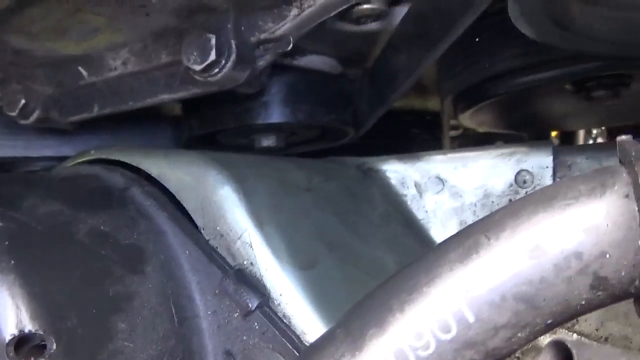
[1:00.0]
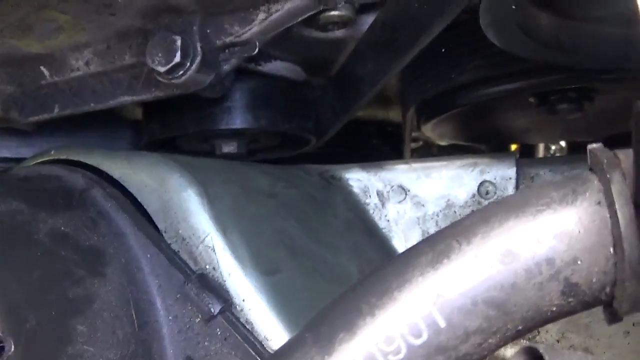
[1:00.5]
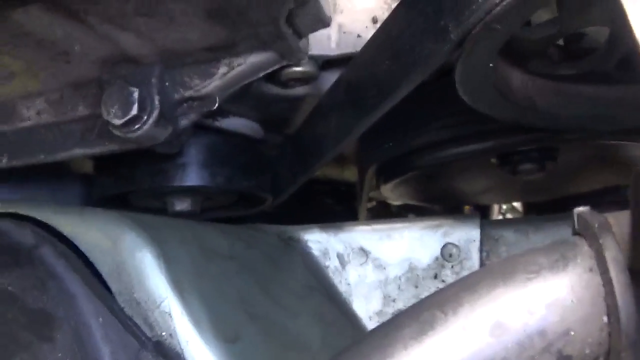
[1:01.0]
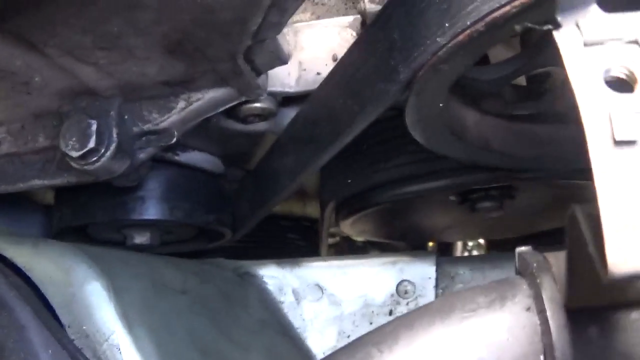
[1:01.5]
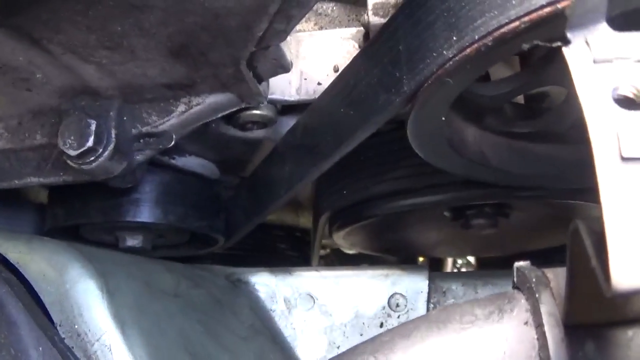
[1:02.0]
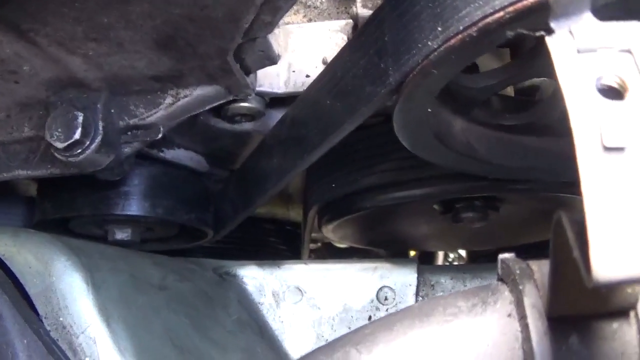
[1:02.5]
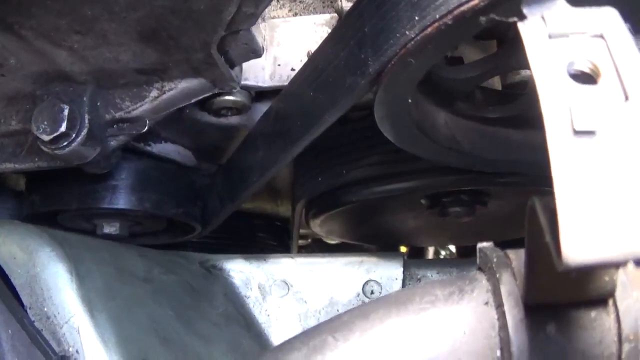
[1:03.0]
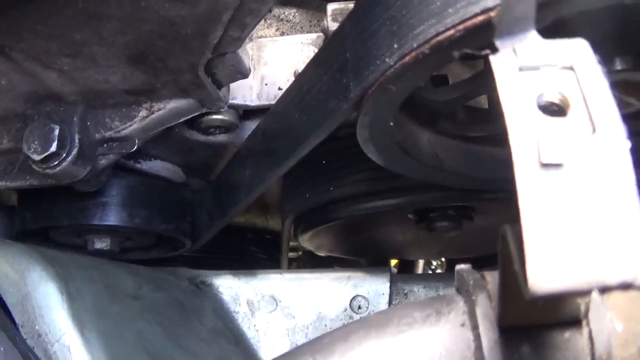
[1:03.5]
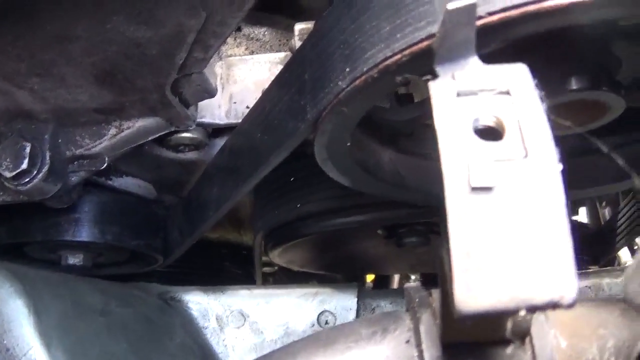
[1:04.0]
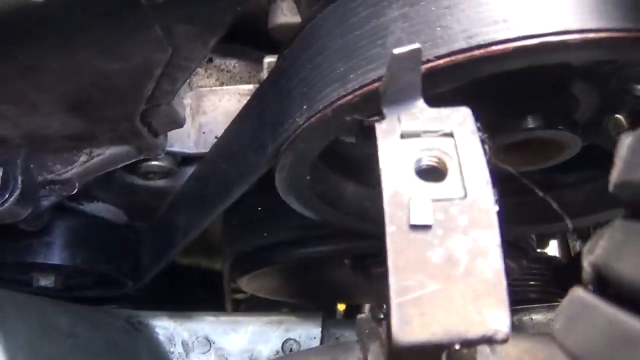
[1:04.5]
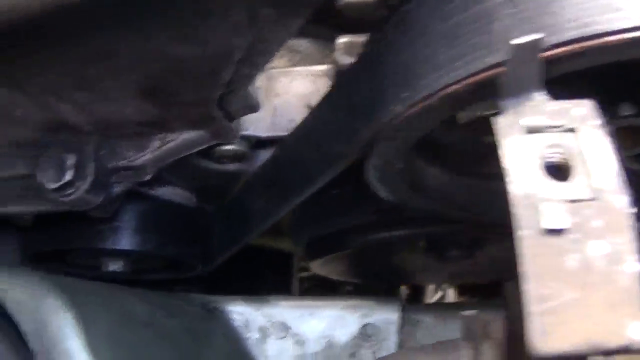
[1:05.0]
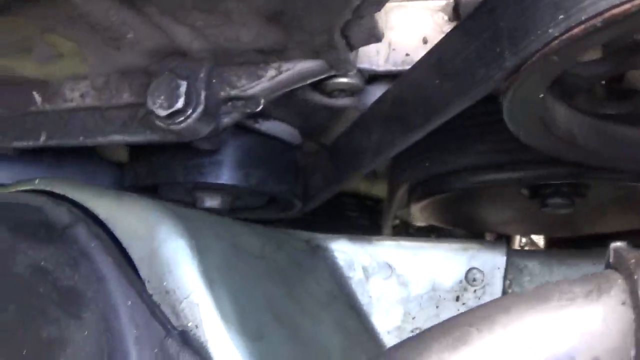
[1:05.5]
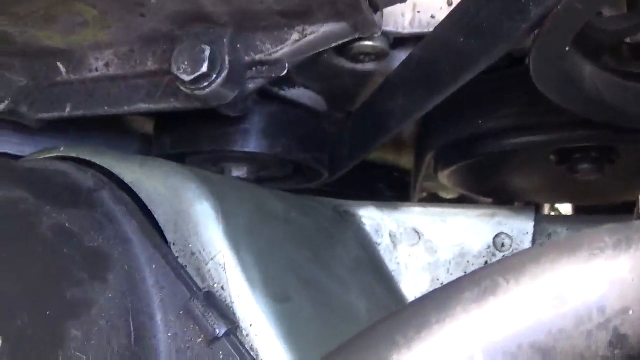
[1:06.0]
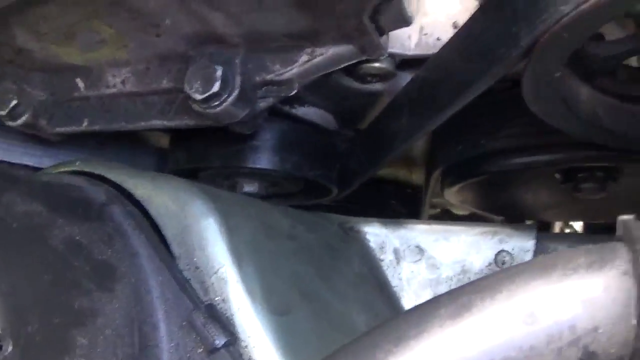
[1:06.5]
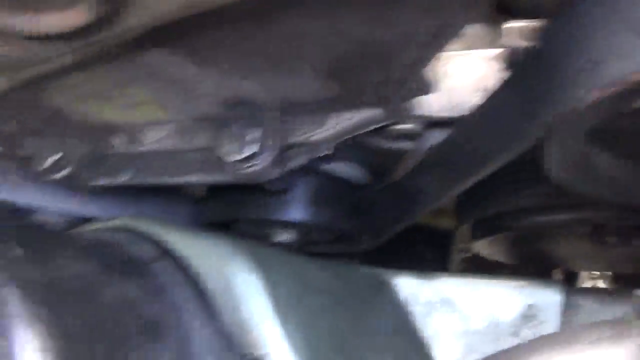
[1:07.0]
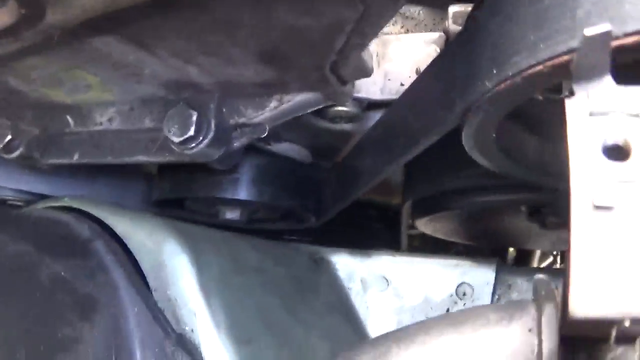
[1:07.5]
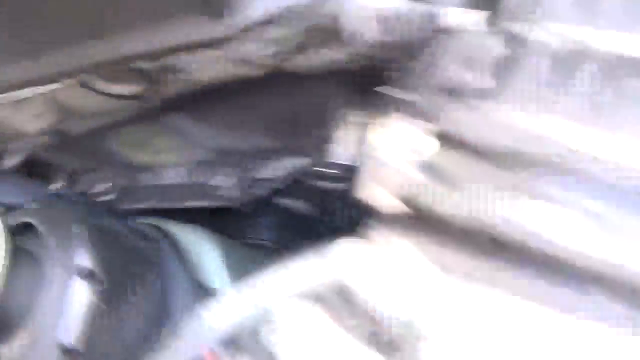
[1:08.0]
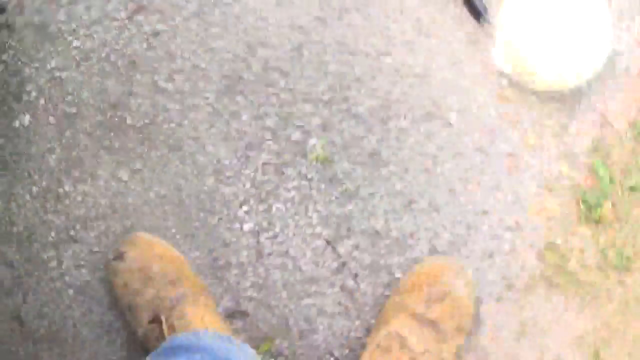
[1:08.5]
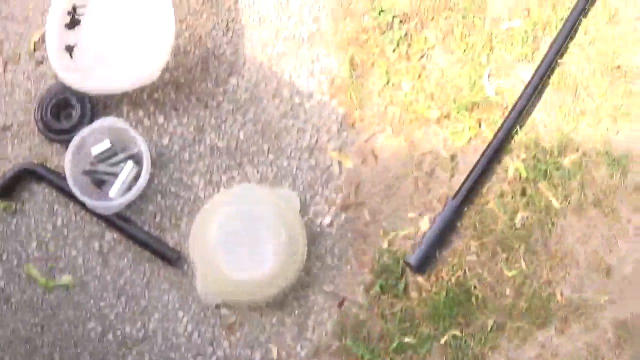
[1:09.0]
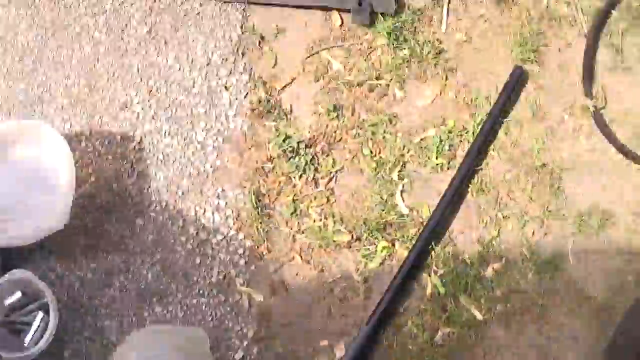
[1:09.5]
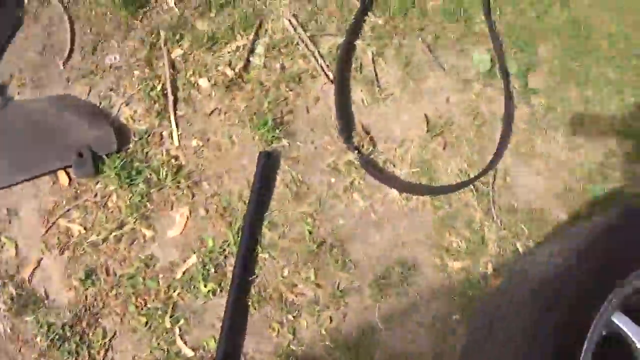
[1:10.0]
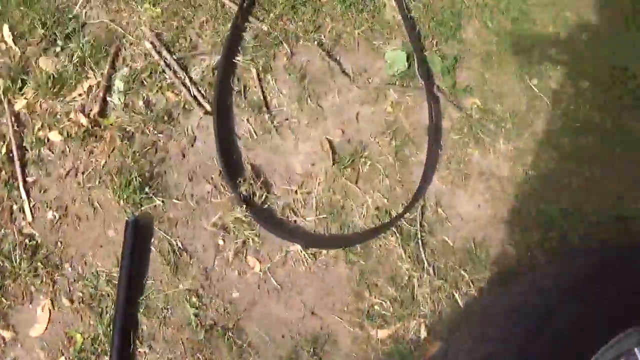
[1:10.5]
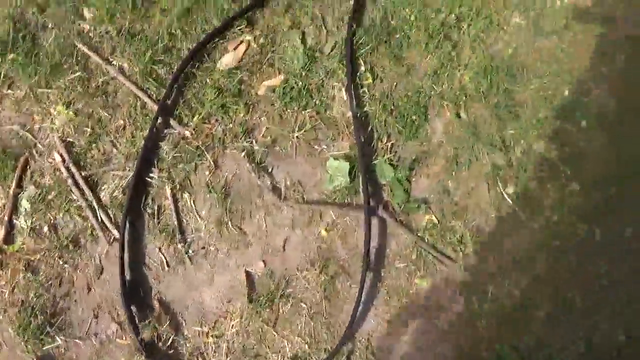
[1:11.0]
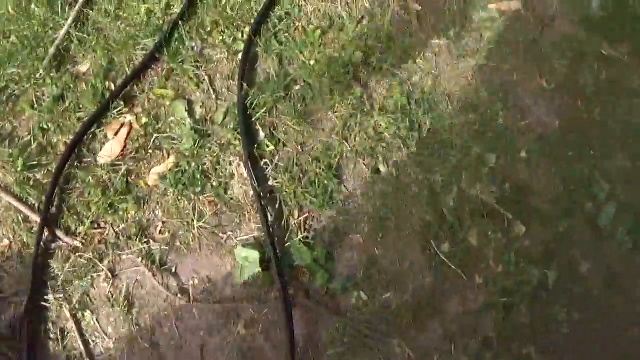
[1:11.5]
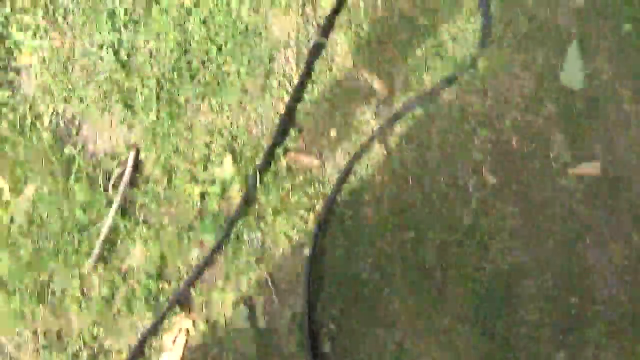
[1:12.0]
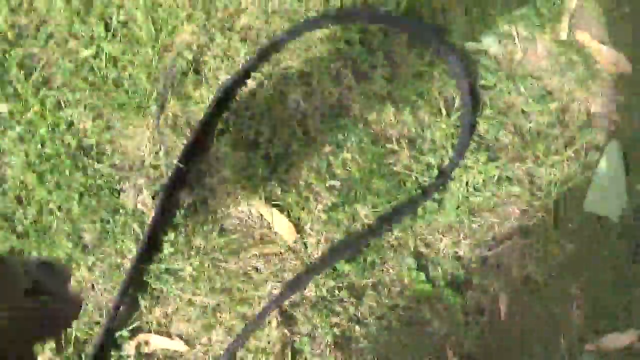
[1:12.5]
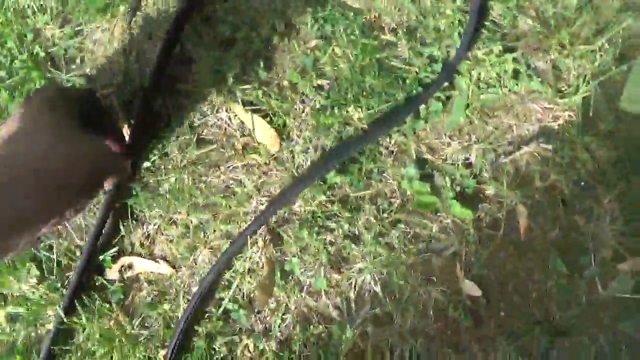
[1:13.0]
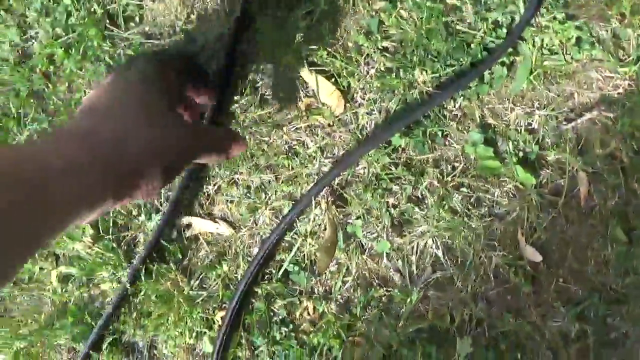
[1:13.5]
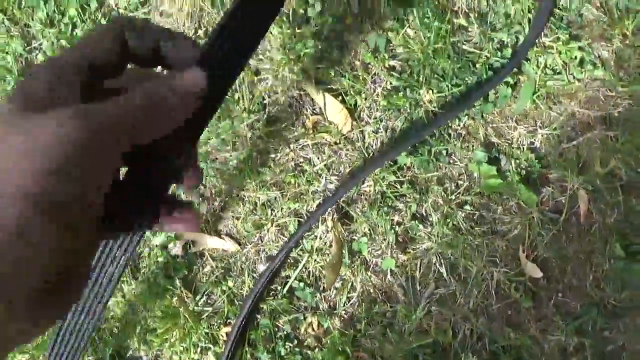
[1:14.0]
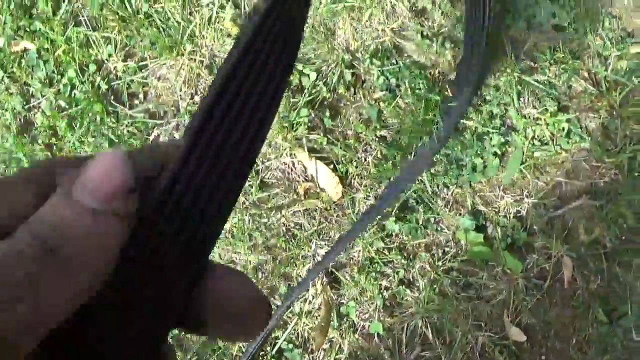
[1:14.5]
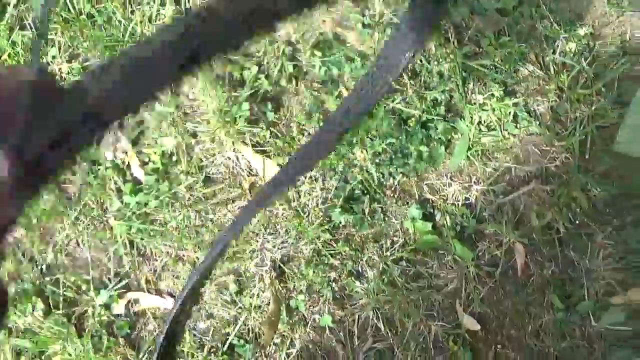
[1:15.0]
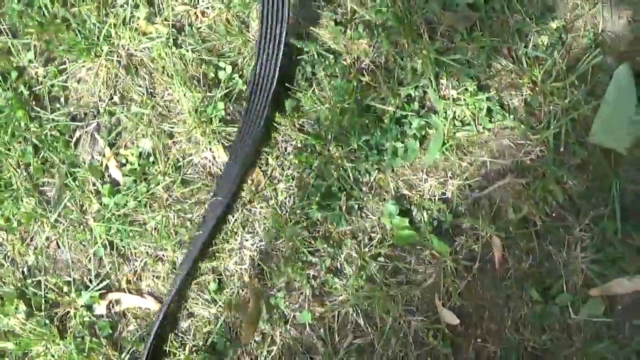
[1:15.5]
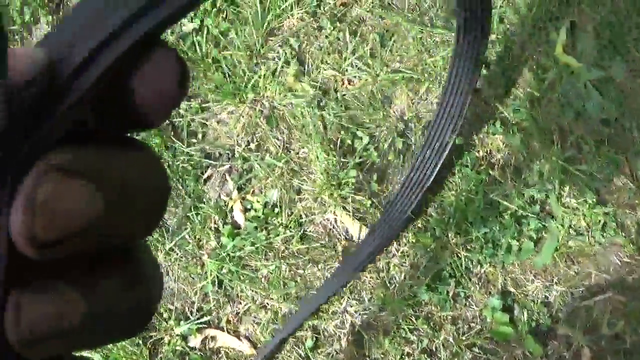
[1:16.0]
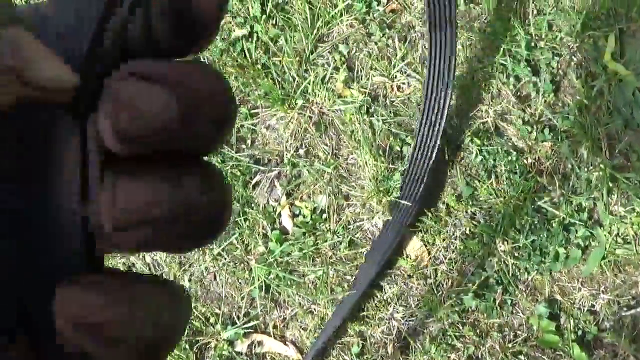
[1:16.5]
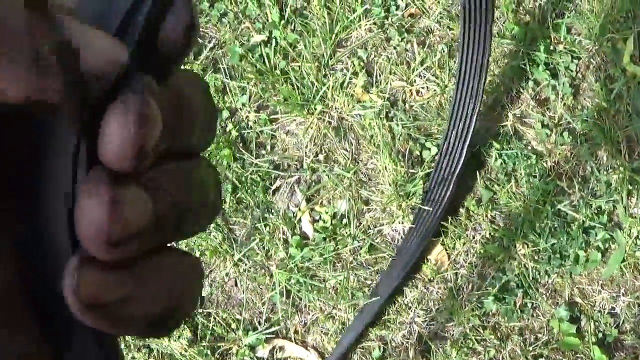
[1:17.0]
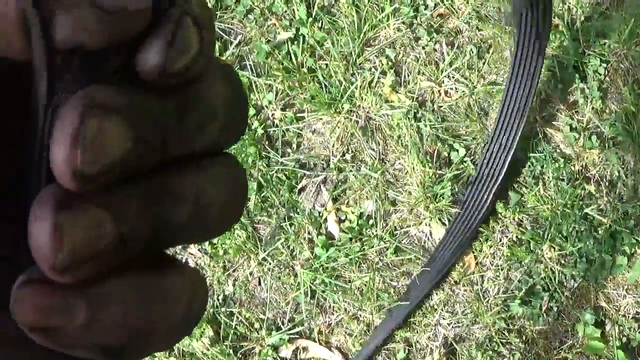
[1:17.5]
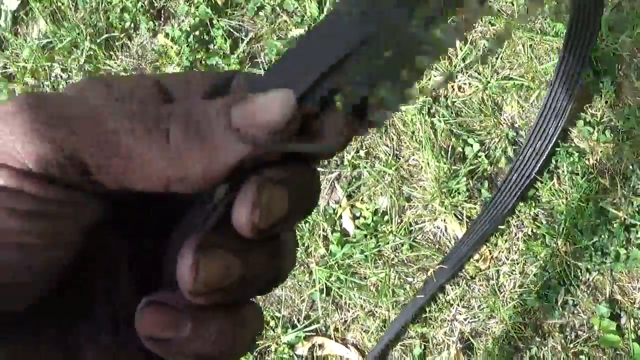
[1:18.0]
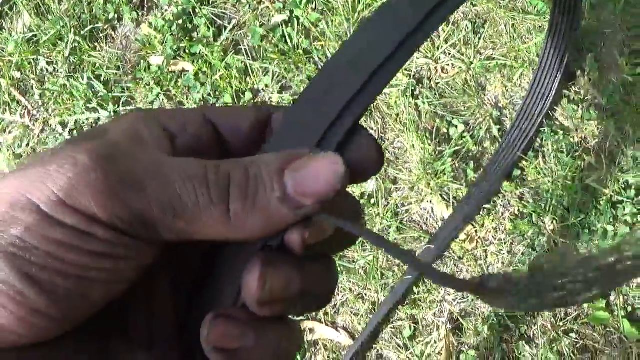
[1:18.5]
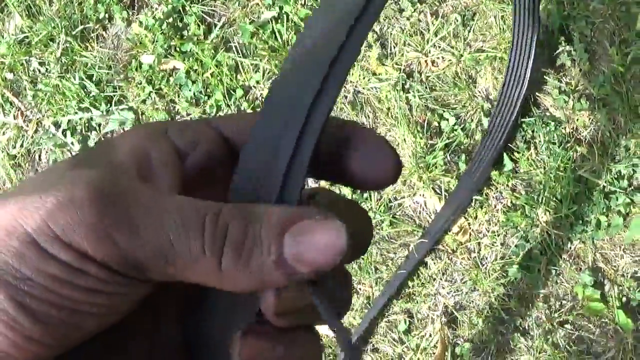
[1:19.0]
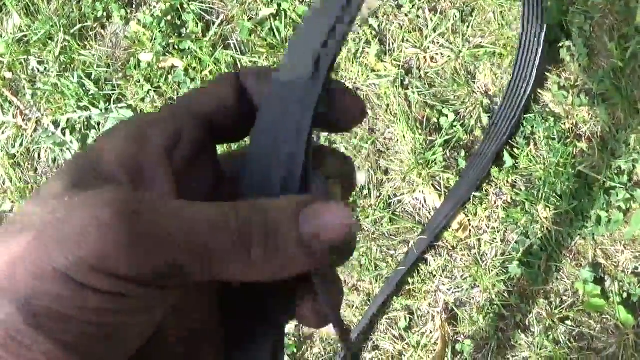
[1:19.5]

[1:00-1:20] An overhead shot shows a large piece of metal flashing with a belt and roller assembly above it. The camera then shifts outside the engine compartment and moves over to a sparsely grassed yard, where various engine components and parts are laid on the ground. One item that can be seen clearly is some kind of belt. The belt is picked up by the individual's left hand, which is greasy and dirty. The belt he is holding appears to be slightly splayed on one end.